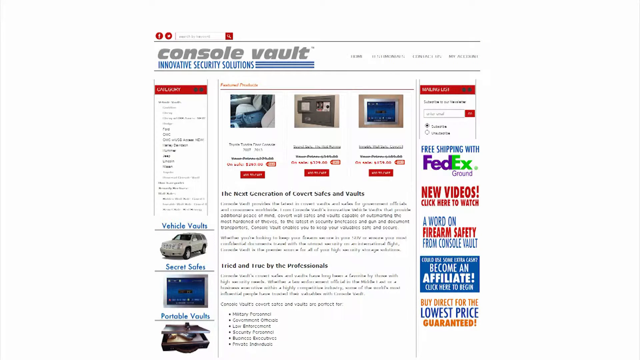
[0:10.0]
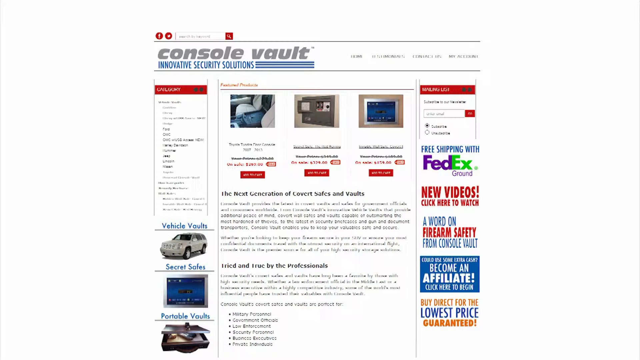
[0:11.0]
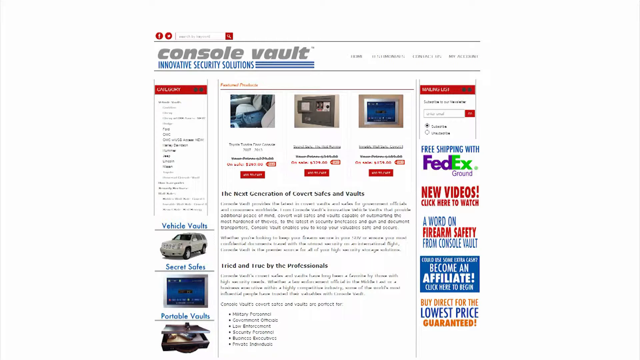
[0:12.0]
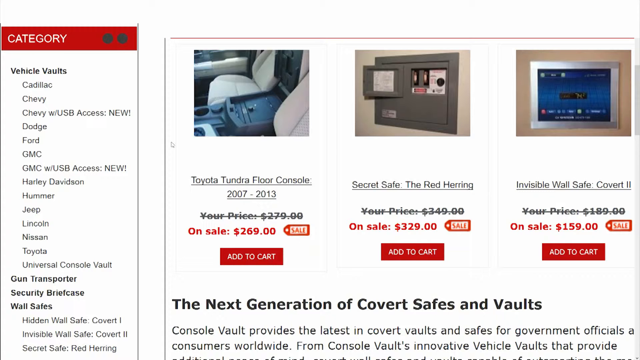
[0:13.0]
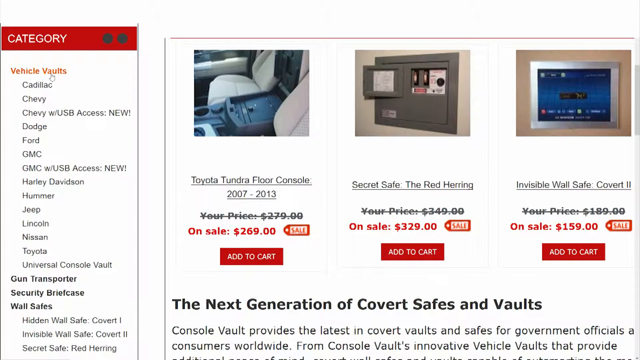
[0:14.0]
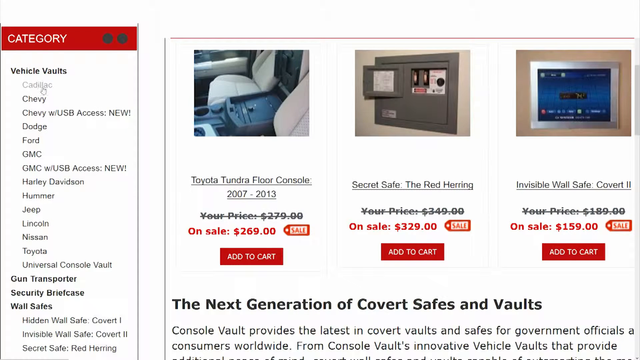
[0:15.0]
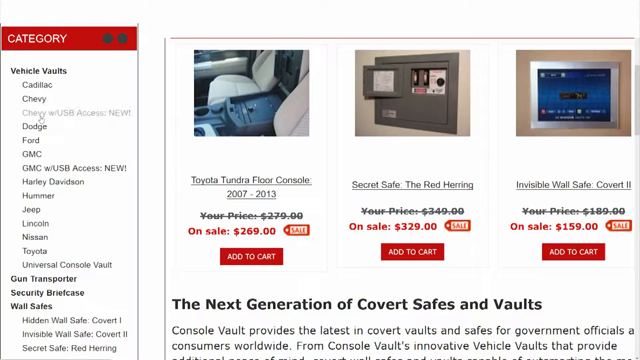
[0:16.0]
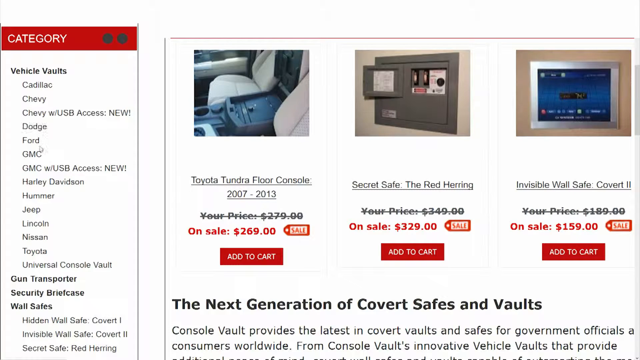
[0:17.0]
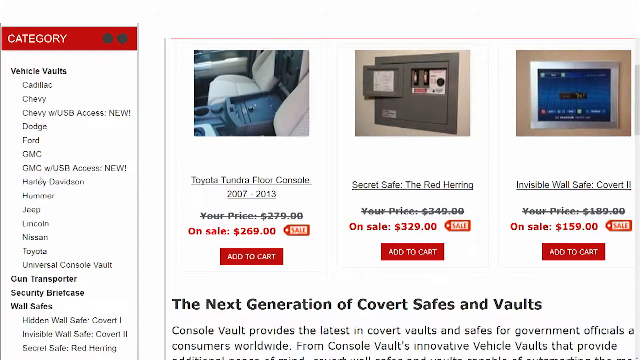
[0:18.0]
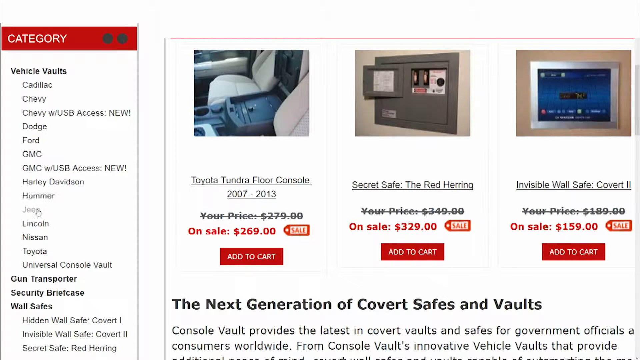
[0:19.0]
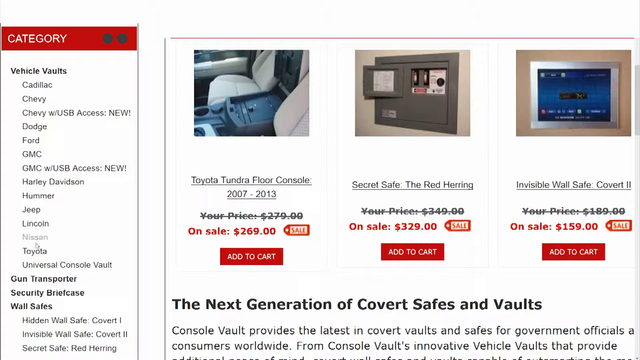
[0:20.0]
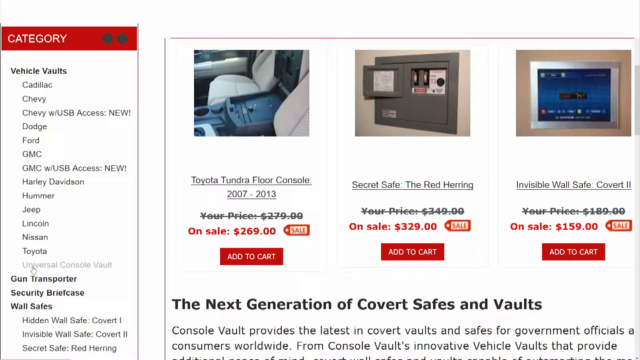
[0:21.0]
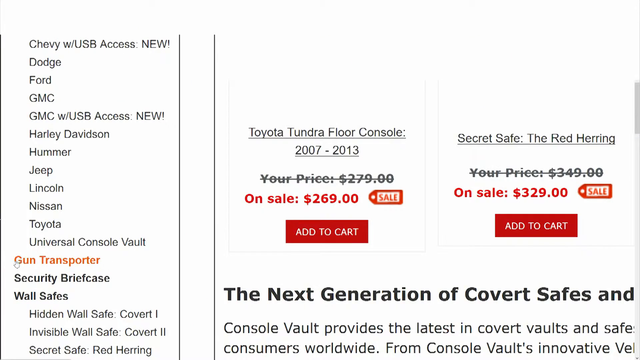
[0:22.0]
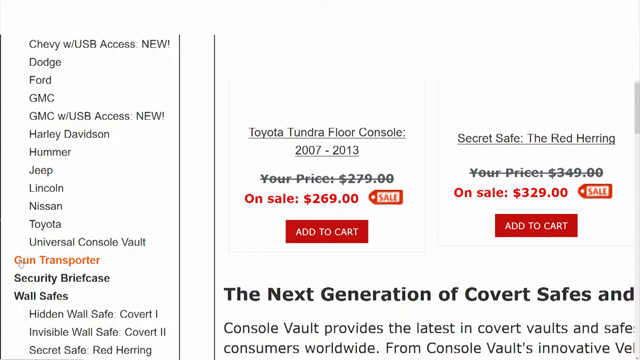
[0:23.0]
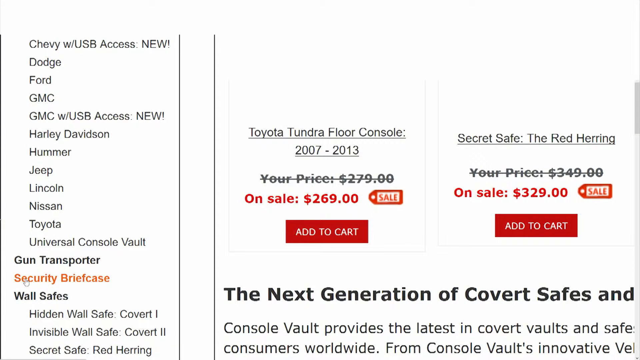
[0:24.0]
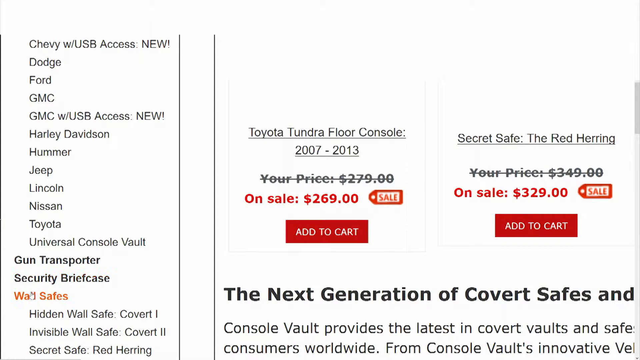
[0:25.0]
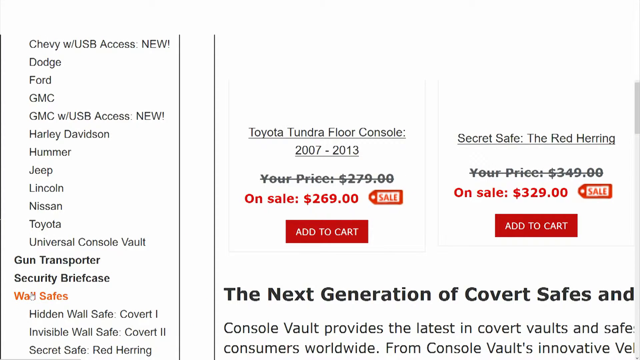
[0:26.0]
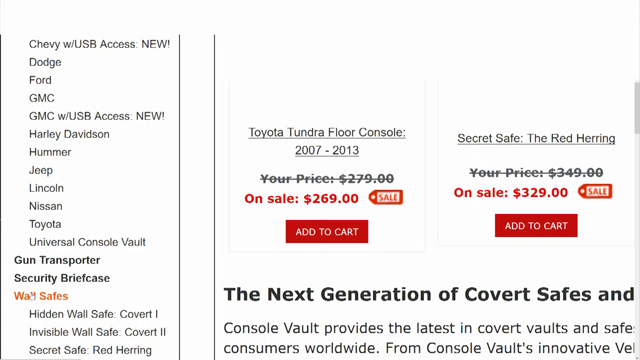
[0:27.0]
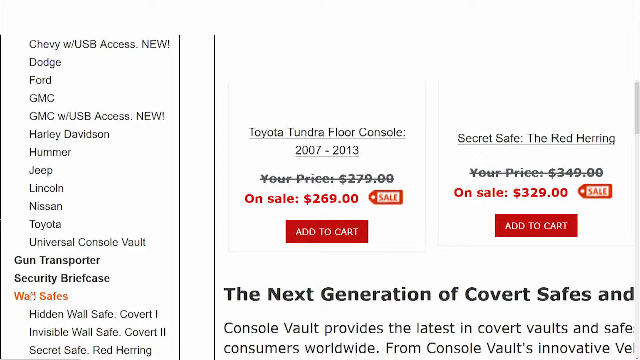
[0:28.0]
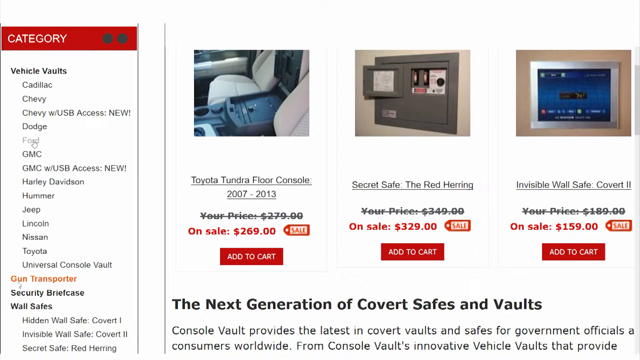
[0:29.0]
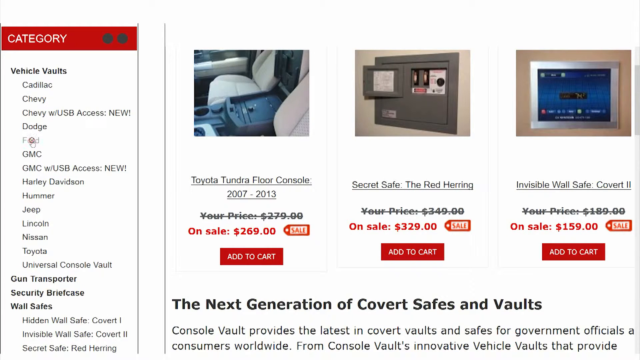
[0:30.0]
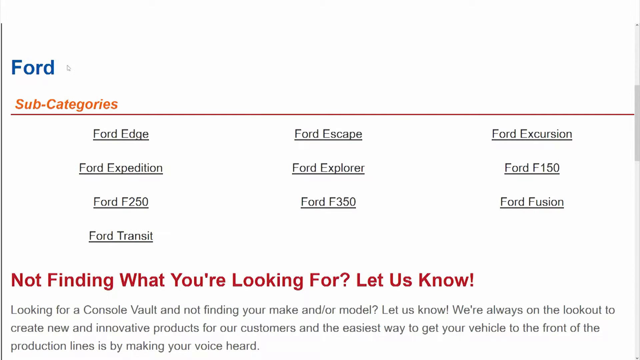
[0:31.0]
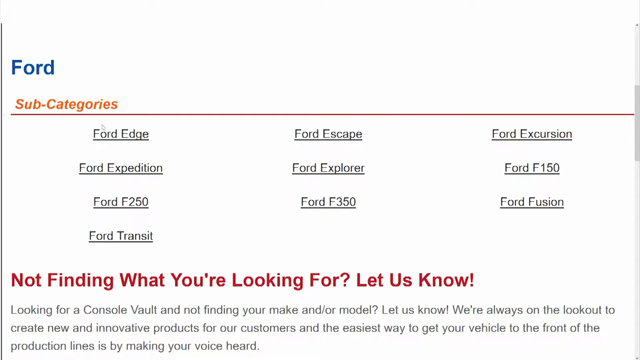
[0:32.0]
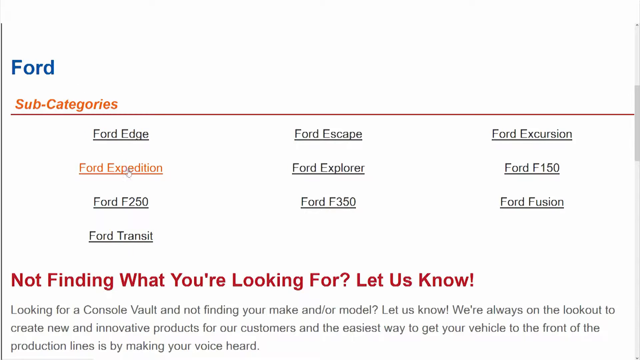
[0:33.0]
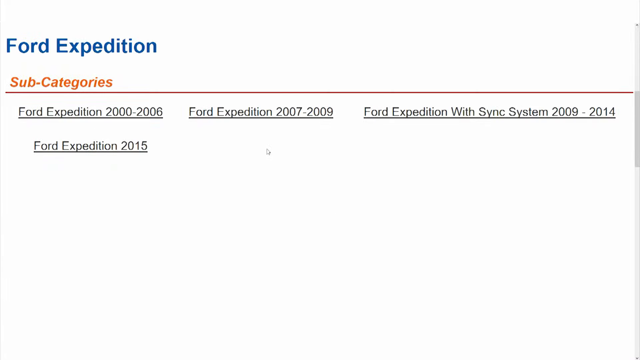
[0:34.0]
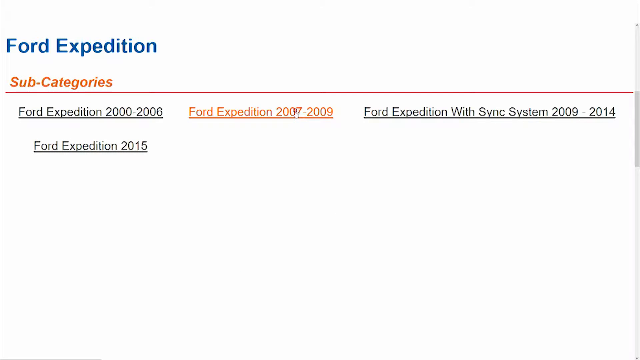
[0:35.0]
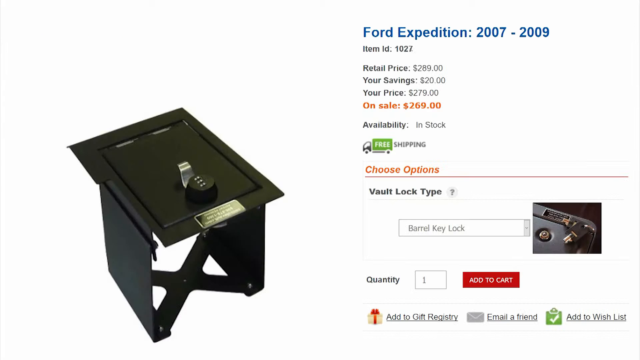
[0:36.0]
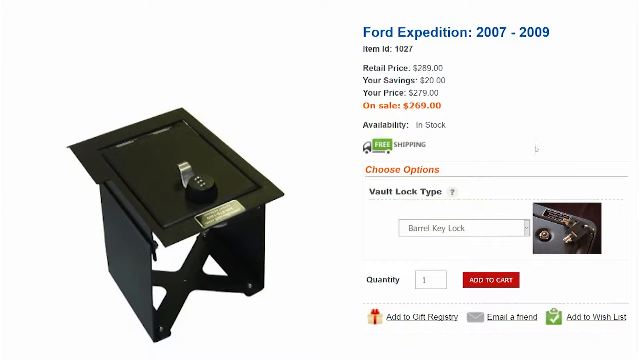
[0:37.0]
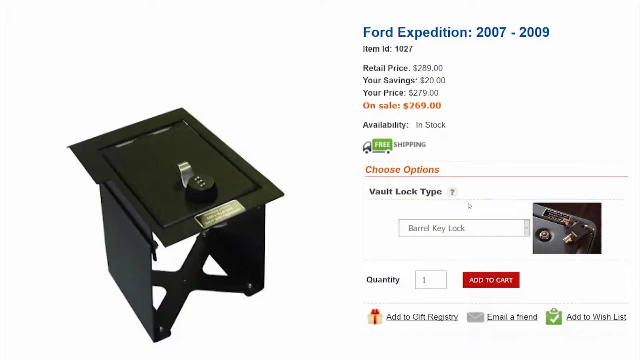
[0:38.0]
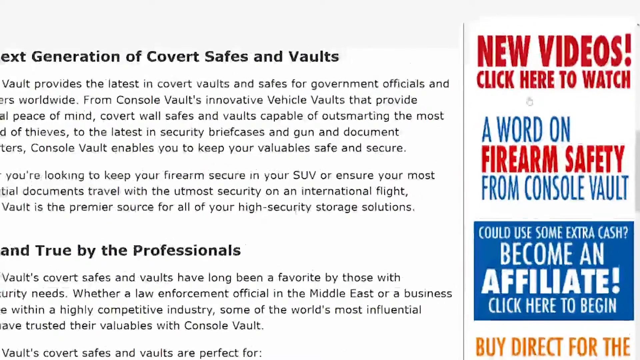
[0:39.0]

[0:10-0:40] The video zooms into some of the vehicle vaults offered by Console Vault. A list of manufacturers is visible in the menu bar on the left-hand side of the screen: Cadillac, Chevy, Chevy with USB access, Dodge, Ford, GMC, GMC with USB access, Harley-Davidson, Hummer, Jeep, Lincoln, Nissan, Toyota, and Universal Console Vault, all under the vehicle vault section. The cursor hovers over each manufacturer one by one going down, then over the gun transporter, security briefcase and wall safe sections underneath. The cursor moves back up to Ford and clicks it, bringing up the subcategories Ford Edge, Ford Escape, Ford Excursion, Ford Expedition, Ford Explorer, Ford F-150, F-250, F-350, Fusion, and Transit. Hovering over Ford Expedition brings up a couple of model years; the cursor hovers over Ford Expedition 2007-2009 and clicks it, bringing up a console vault on sale for $269. An image of the vault is on the left-hand side, along with an option to choose the vault lock type. The screen then transitions to a zoomed-in area showing "new videos! Click here to watch" in red text.